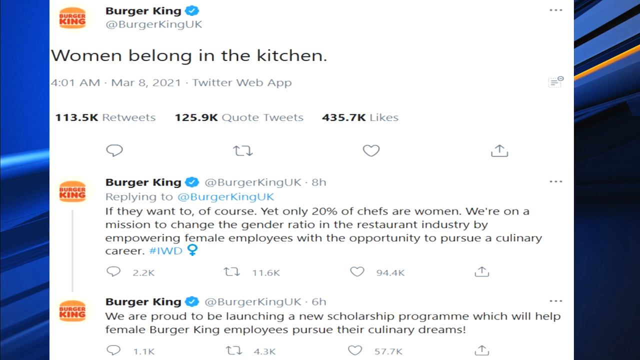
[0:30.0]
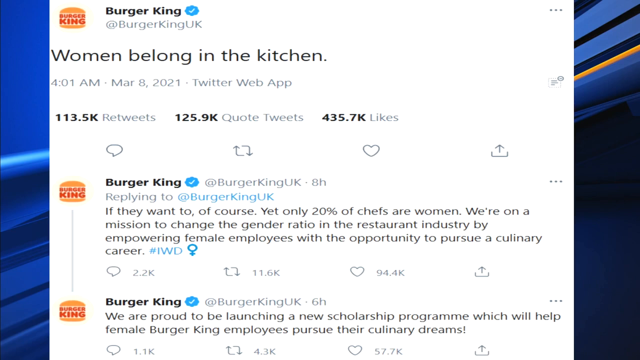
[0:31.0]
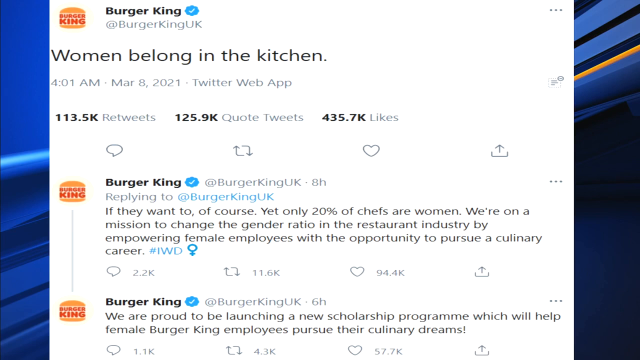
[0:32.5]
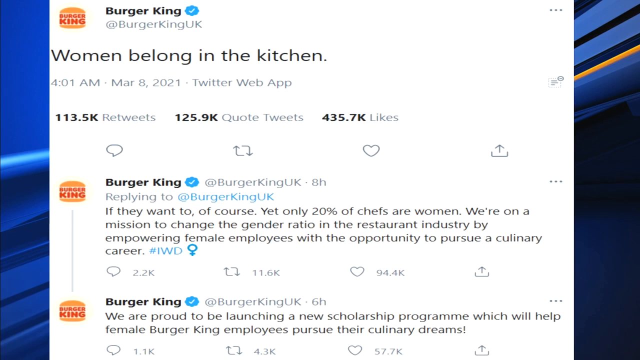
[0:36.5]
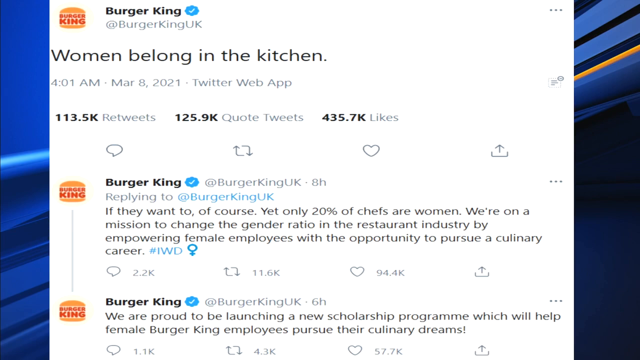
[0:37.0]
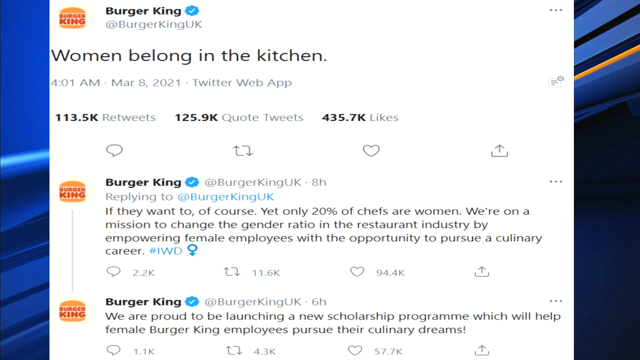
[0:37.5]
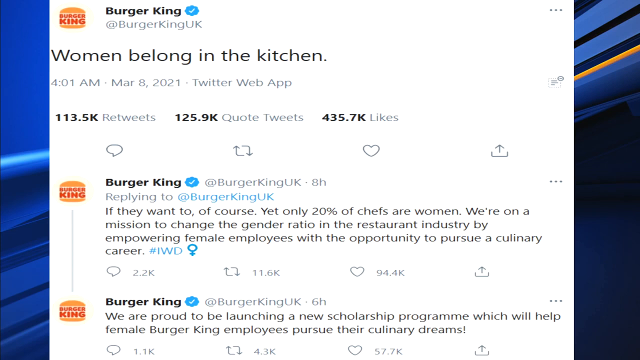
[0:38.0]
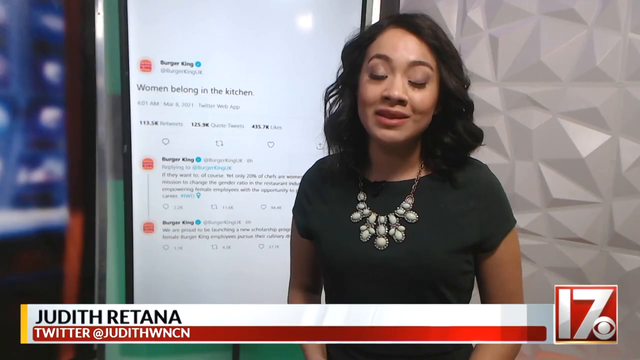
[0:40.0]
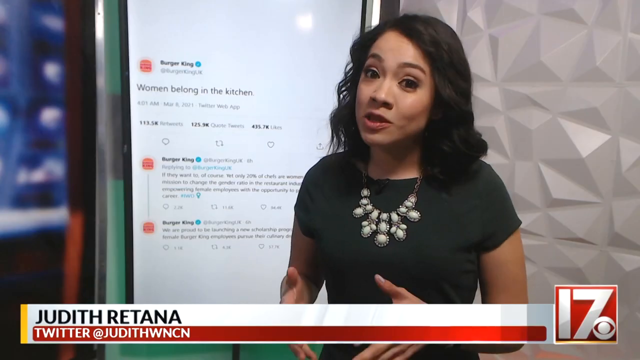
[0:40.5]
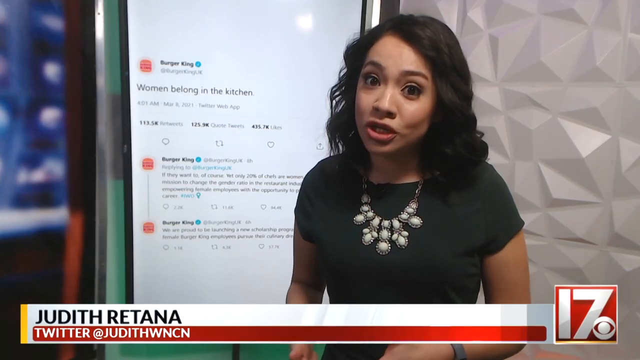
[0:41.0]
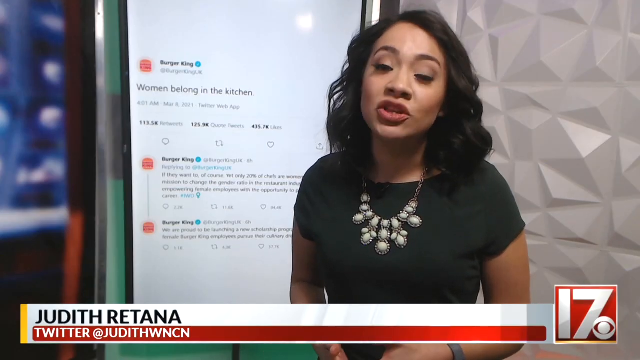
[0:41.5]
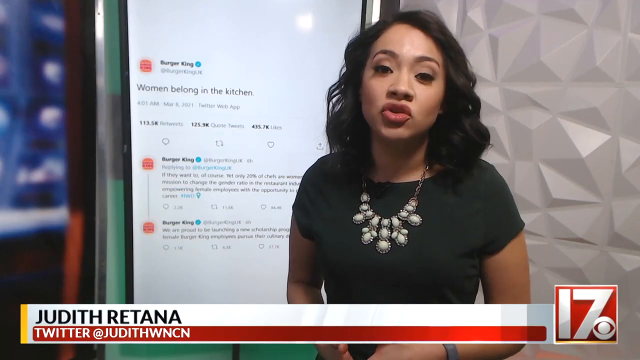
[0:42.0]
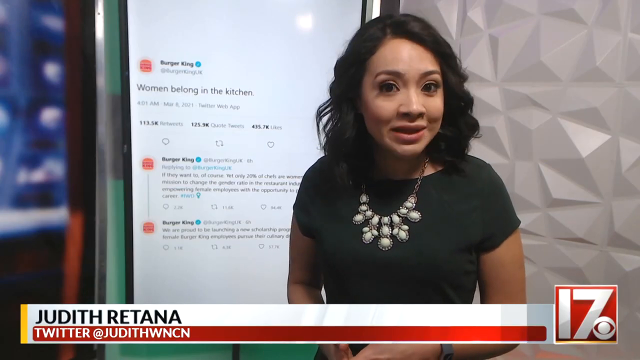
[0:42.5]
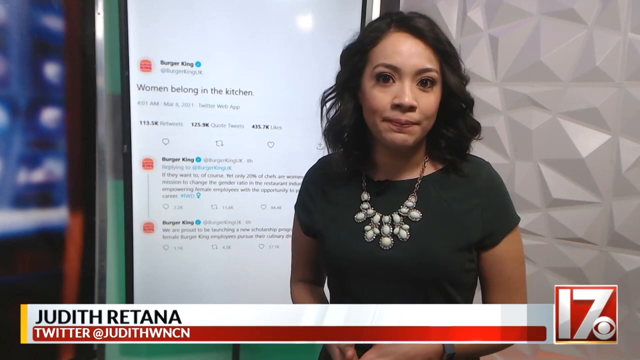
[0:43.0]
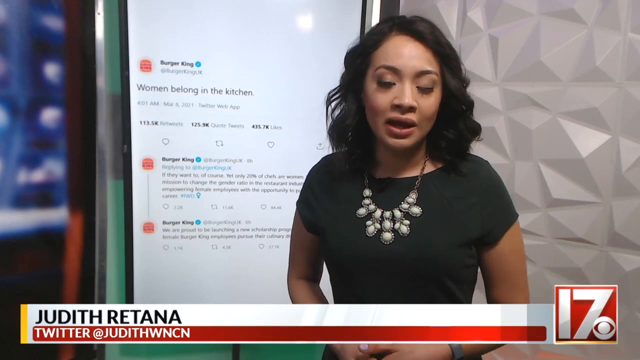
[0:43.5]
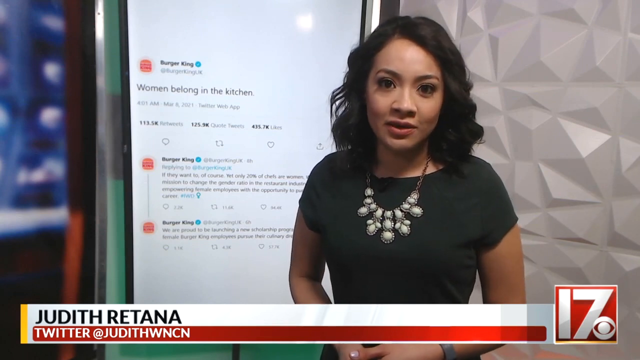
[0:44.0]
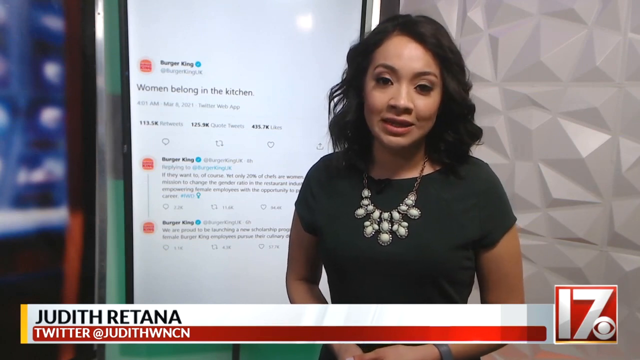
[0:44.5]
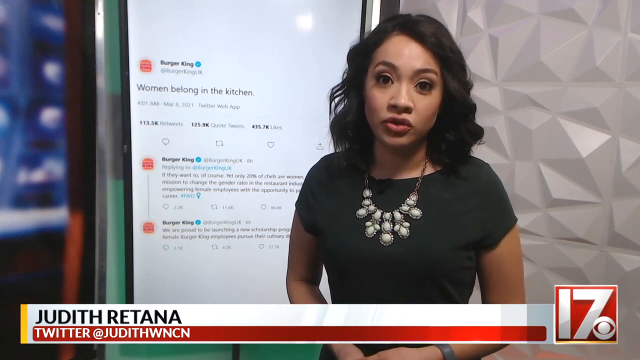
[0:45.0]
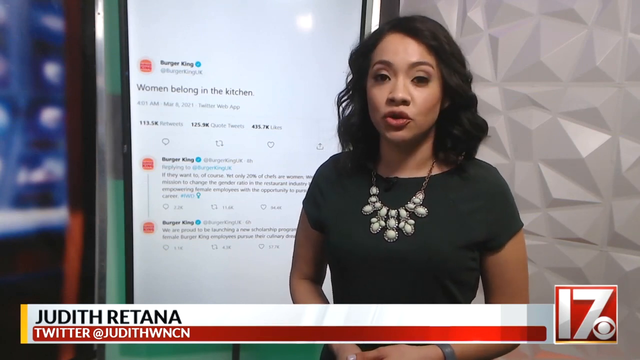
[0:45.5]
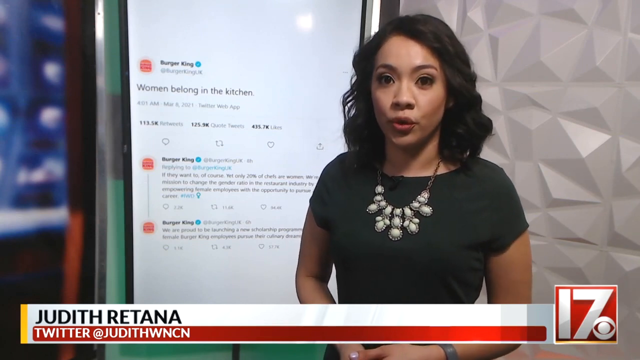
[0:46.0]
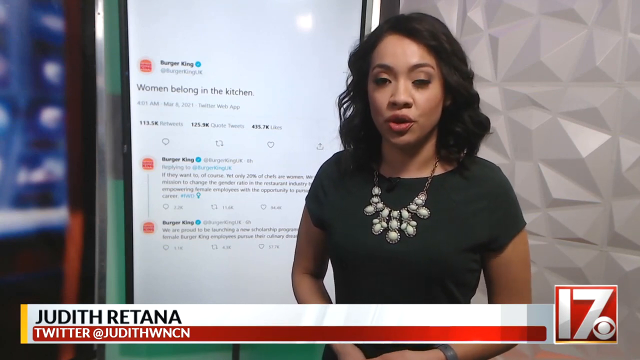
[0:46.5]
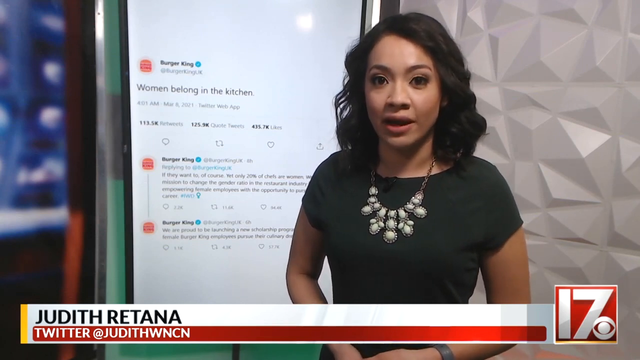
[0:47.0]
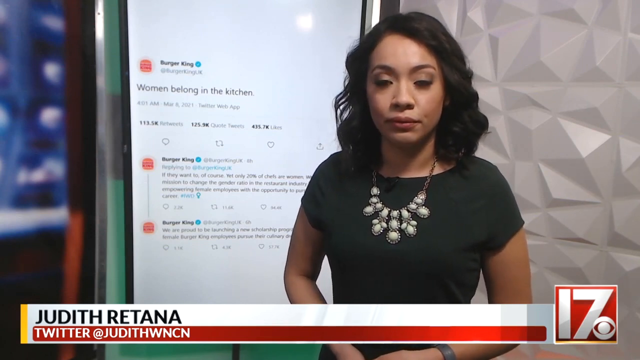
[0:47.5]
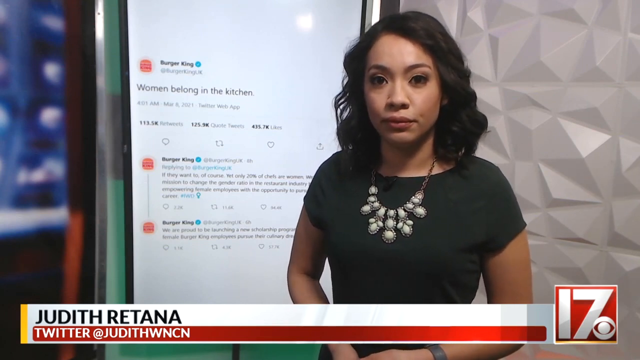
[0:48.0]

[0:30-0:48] The shot begins on the Burger King UK tweet, then transitions back to the woman speaking. She looks very irate and a little angry, facing the camera and talking directly to it while the Burger King tweet remains in the background. Text at the bottom of the screen says "Twitter" and gives her handle.